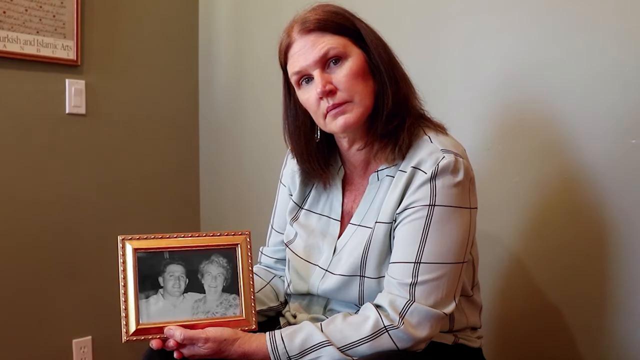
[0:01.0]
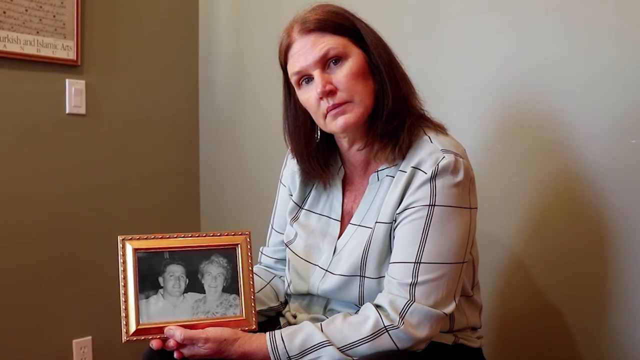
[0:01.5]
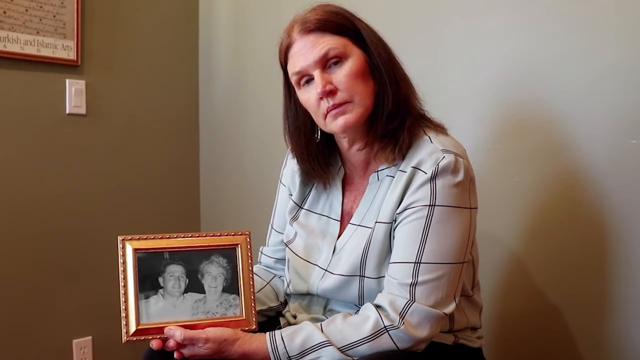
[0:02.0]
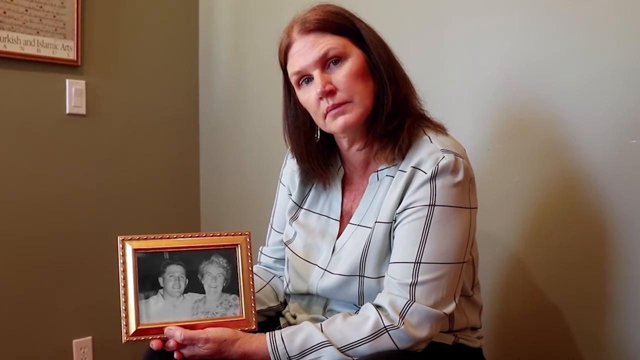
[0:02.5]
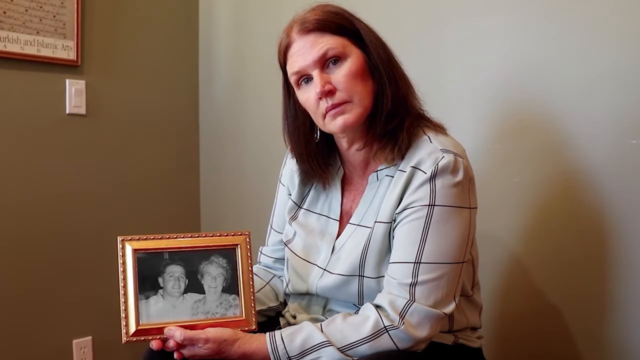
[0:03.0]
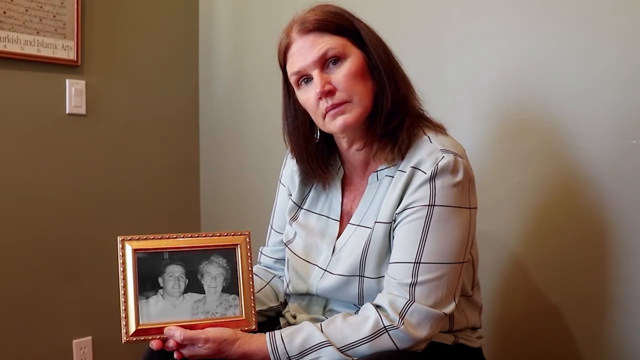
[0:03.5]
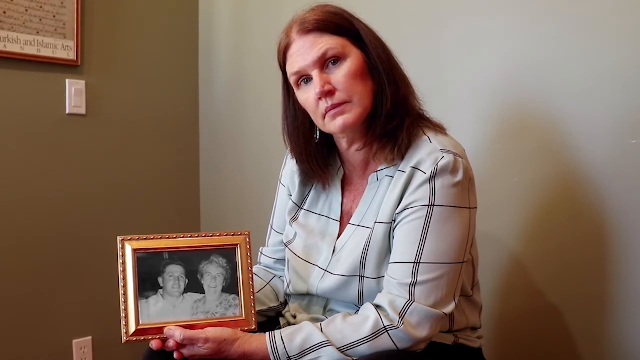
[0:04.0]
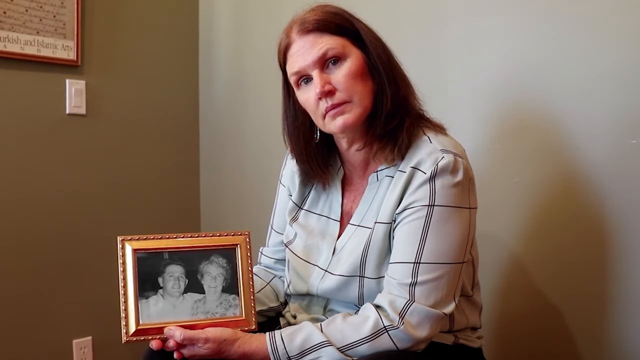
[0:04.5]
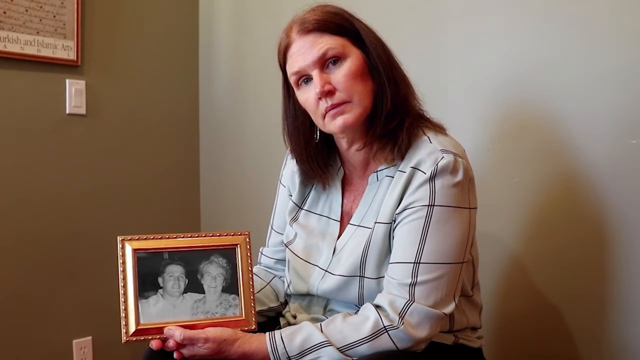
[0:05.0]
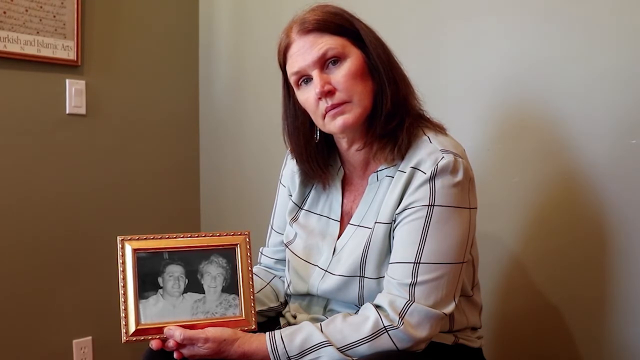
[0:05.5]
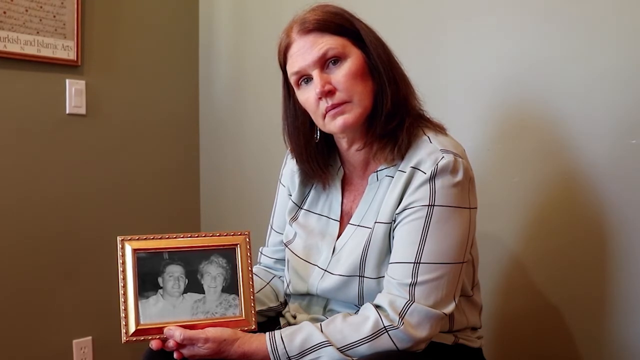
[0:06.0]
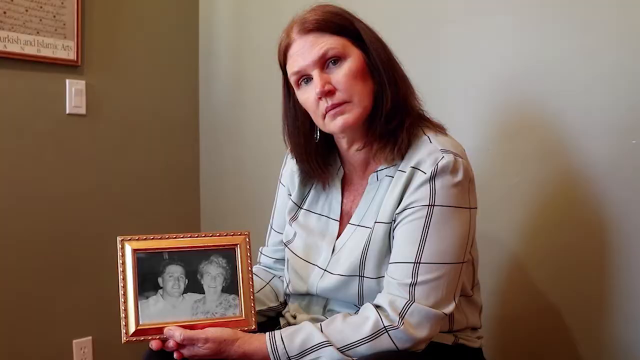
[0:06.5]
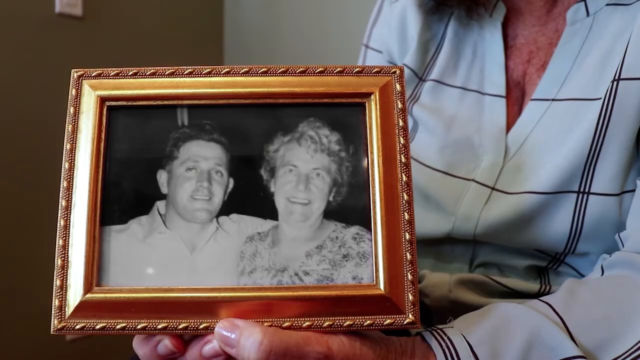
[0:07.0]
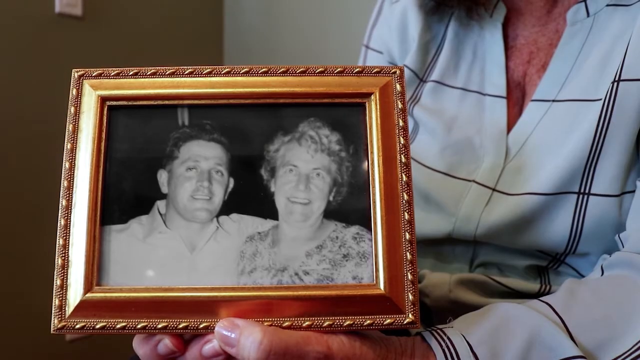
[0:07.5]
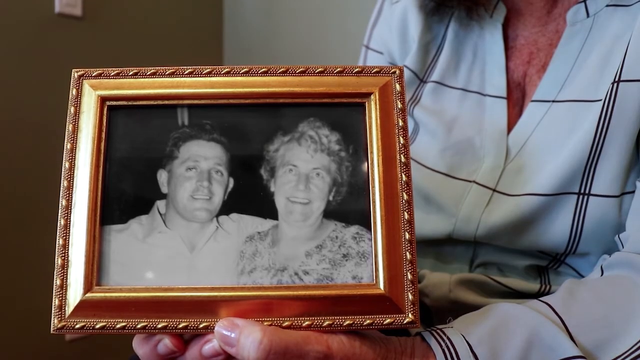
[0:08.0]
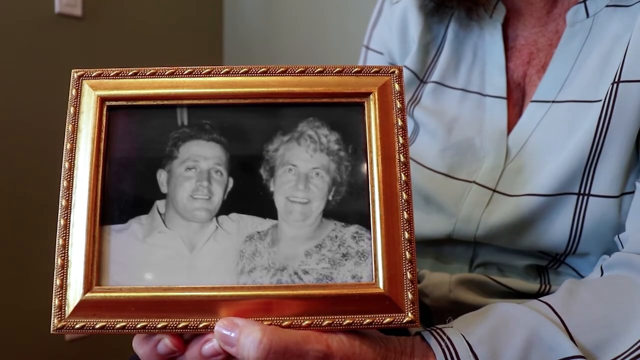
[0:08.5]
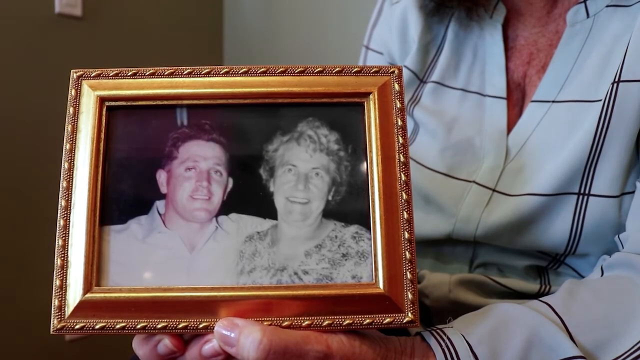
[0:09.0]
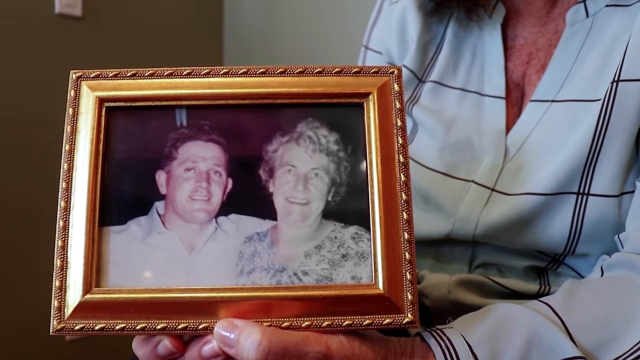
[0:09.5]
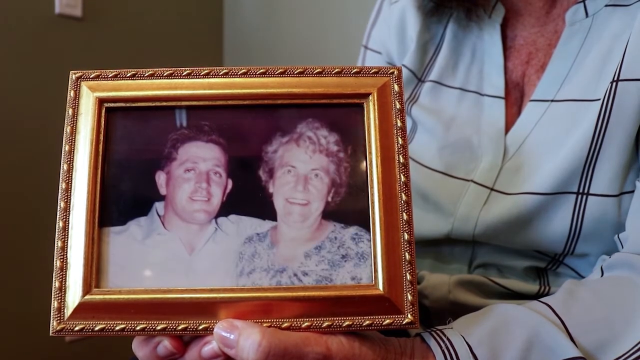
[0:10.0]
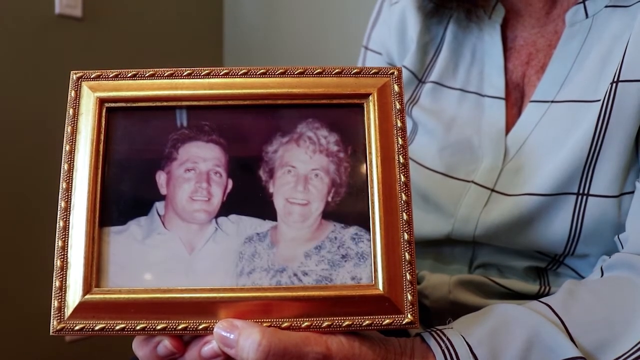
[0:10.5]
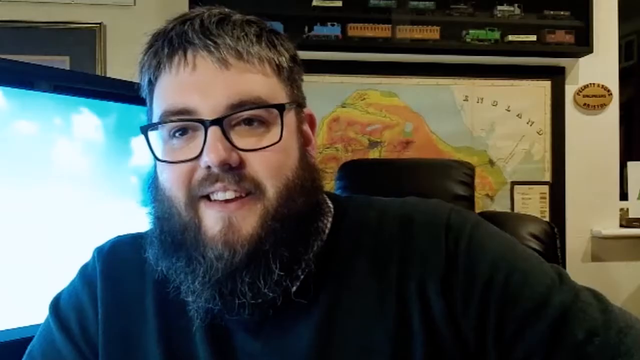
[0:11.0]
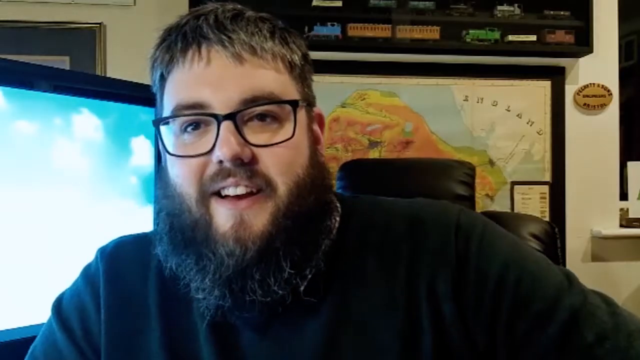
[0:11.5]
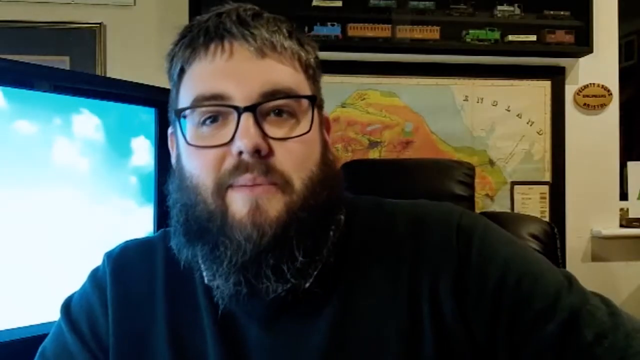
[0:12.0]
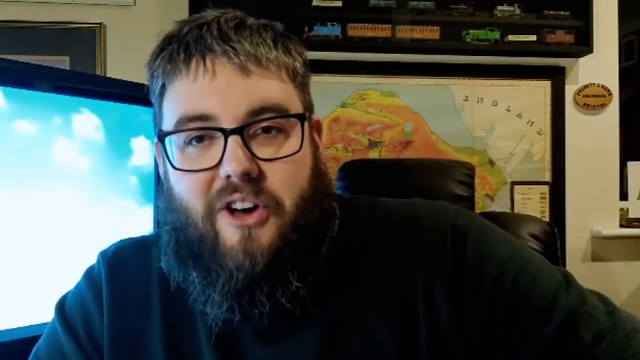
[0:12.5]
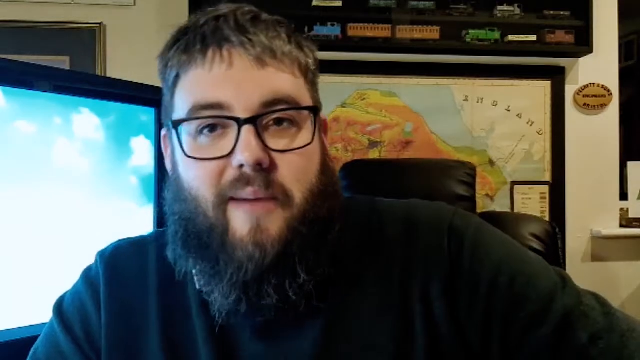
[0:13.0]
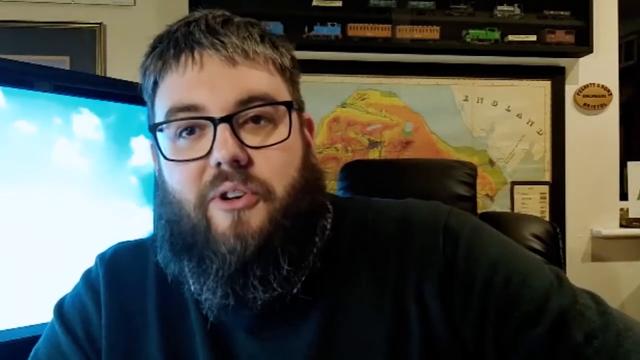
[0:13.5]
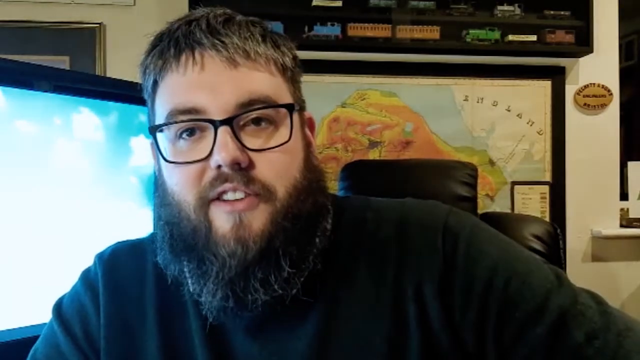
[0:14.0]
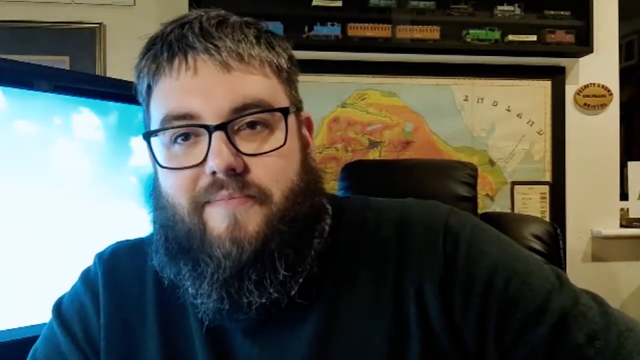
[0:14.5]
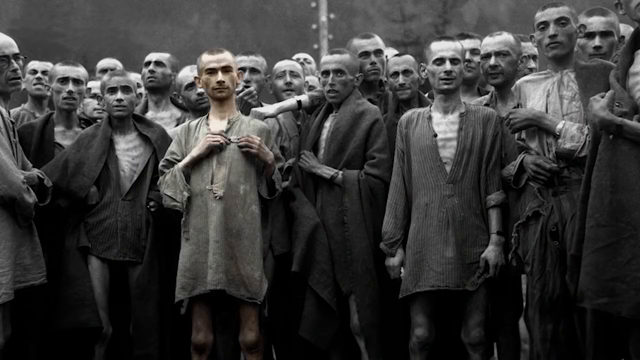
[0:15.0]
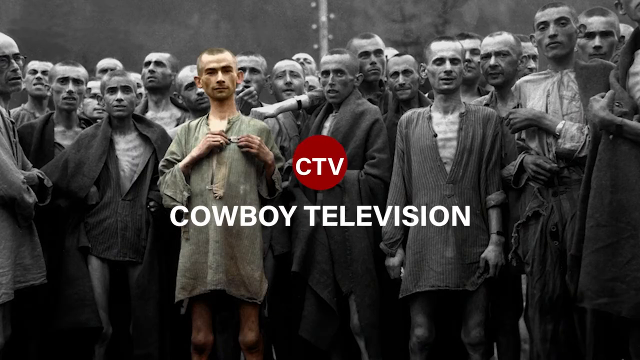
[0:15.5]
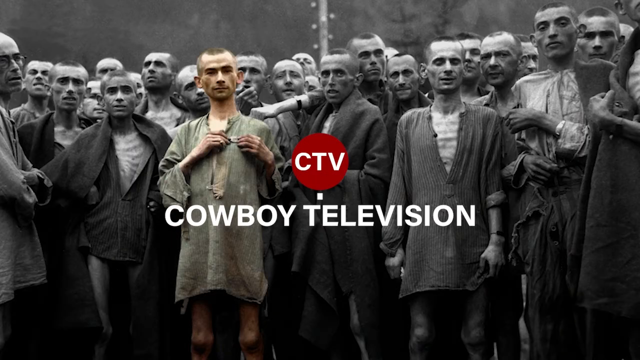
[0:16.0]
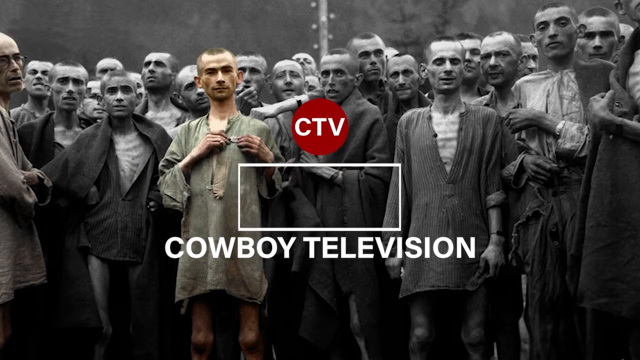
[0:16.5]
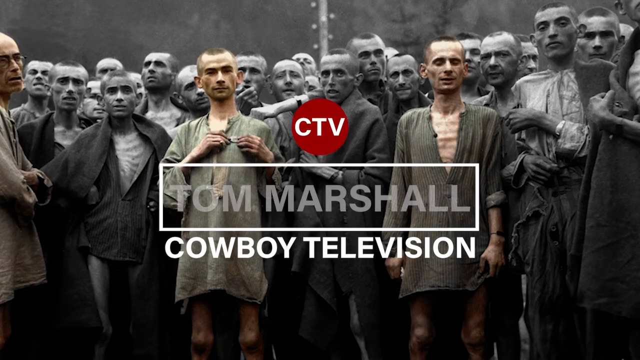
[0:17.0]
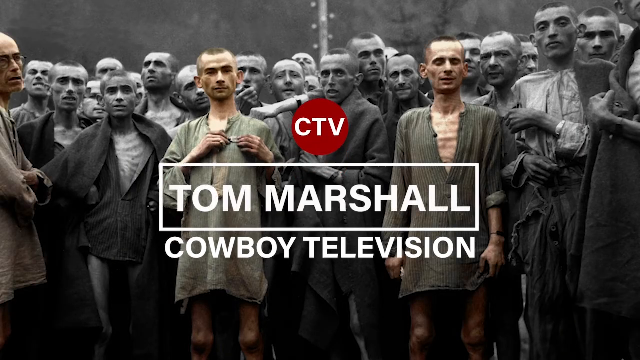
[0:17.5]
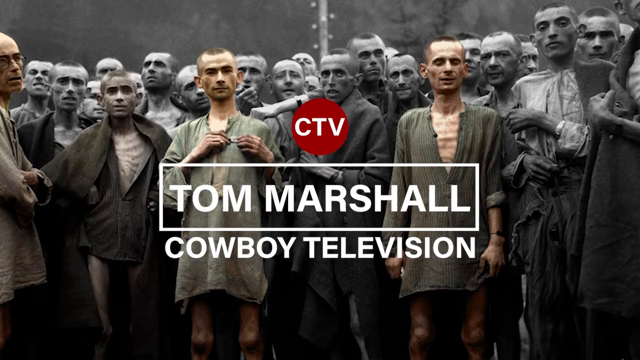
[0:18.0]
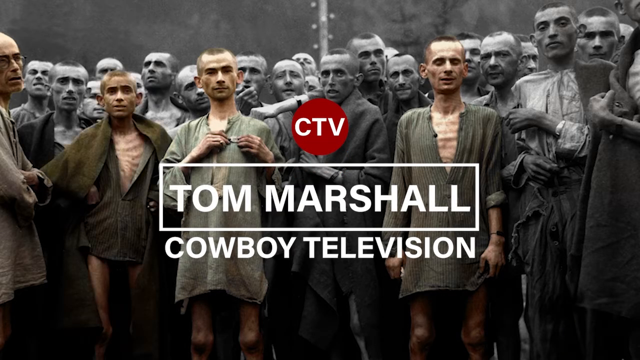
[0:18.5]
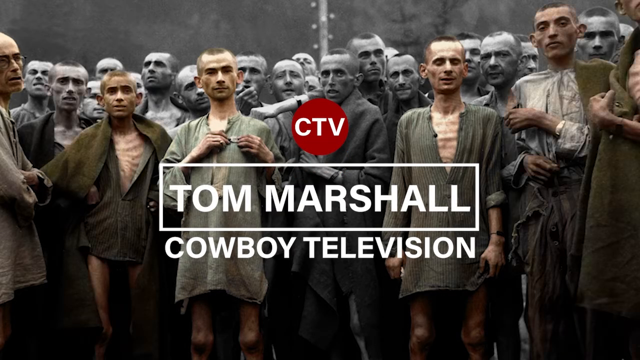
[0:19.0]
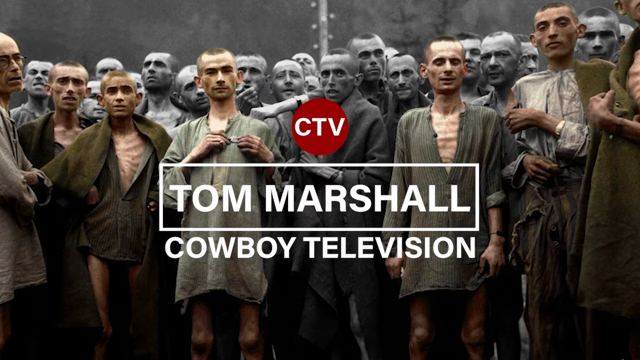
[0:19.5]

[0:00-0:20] A white woman with reddish hair stares at the camera, holding what appears to be a picture, possibly of her parents. She is in a room with greenish walls, and on the wall is a painting or picture with a reddish border. A close-up shows what might be her parents. Next, a man appears with glasses, a lot of facial hair, a beard and short hair. To the left are some pictures or screens, including a computer screen showing clouds, and behind him is a map-looking picture with a black border. The walls are a whitish tan, and on a shelf is something that looks like little toys, possibly train toys. The video then shows Cowboy Television, CTV, with many people in black and white and one in color, and text reading "Tom Marshall". Some of these people look very thin.